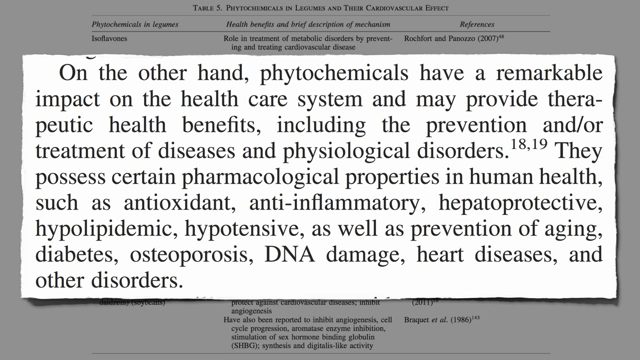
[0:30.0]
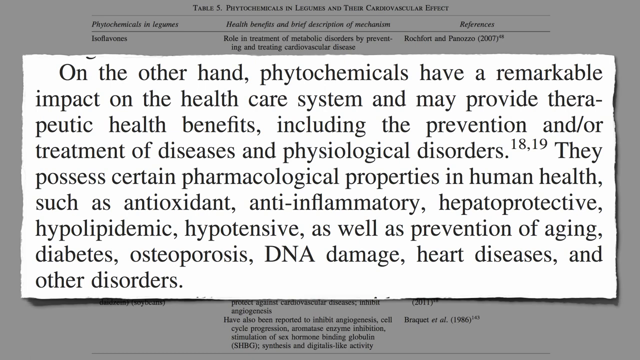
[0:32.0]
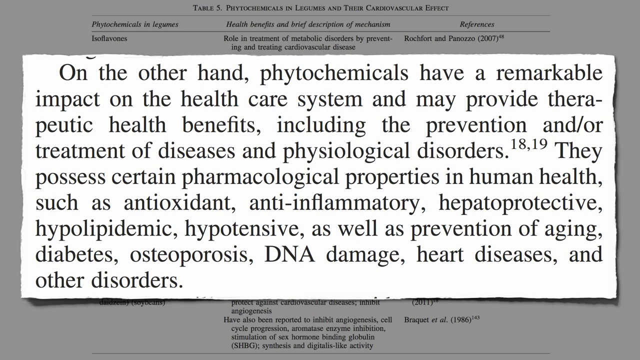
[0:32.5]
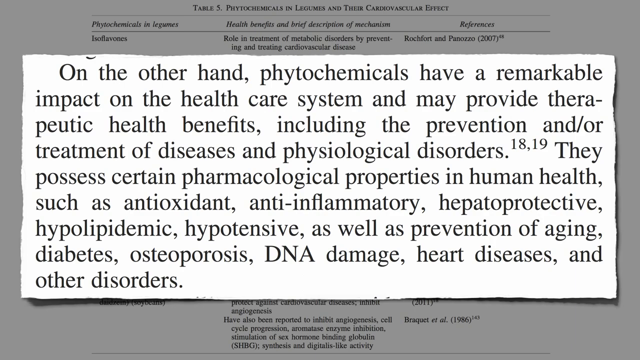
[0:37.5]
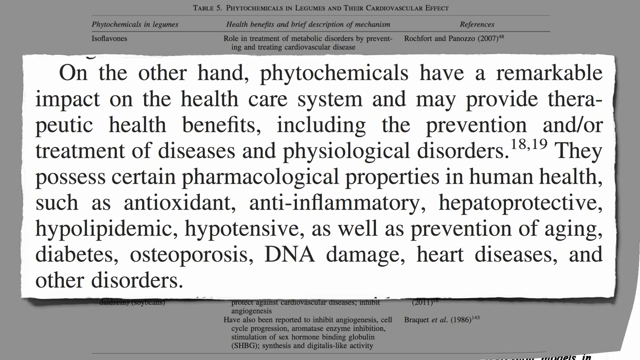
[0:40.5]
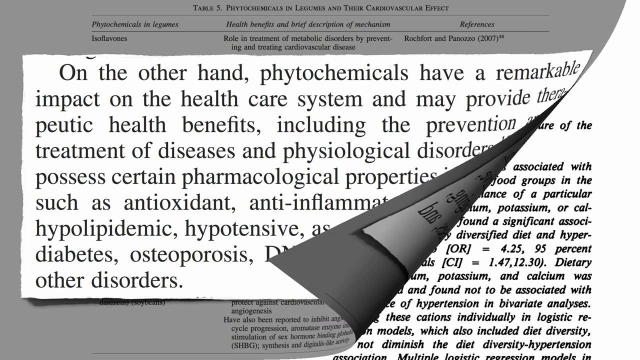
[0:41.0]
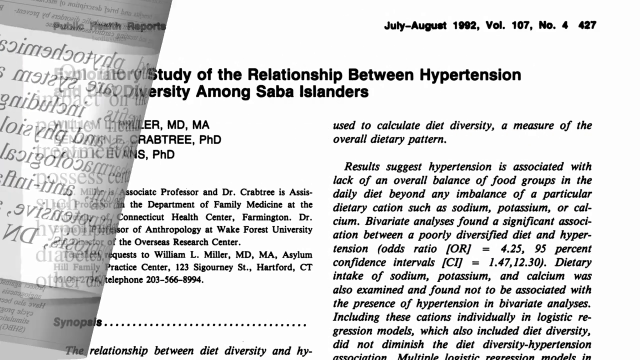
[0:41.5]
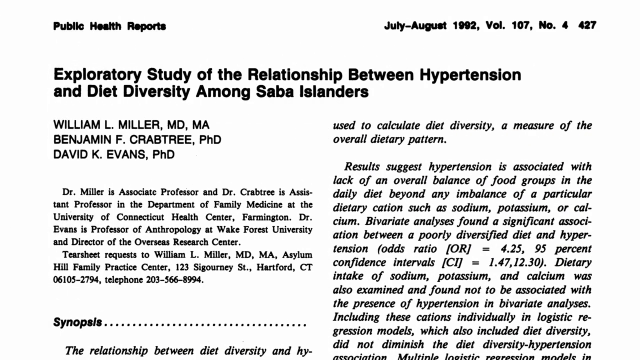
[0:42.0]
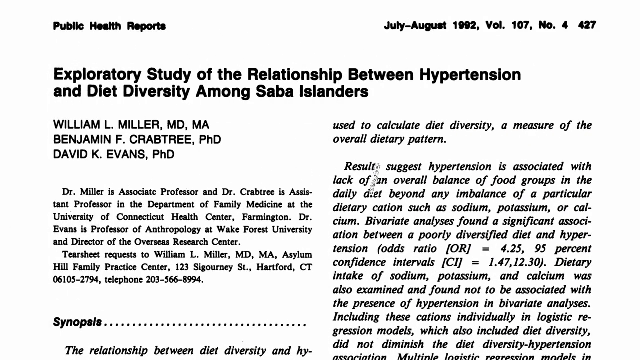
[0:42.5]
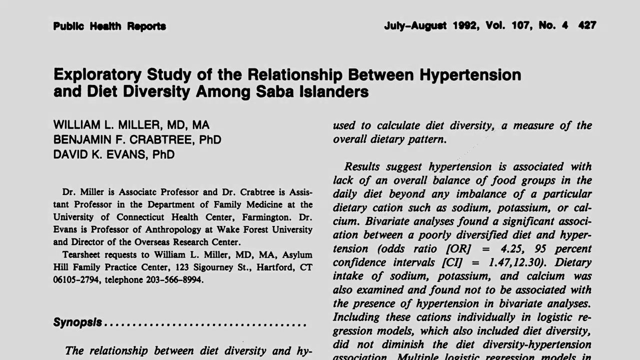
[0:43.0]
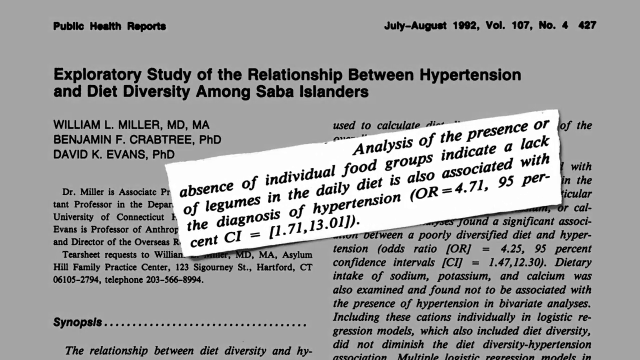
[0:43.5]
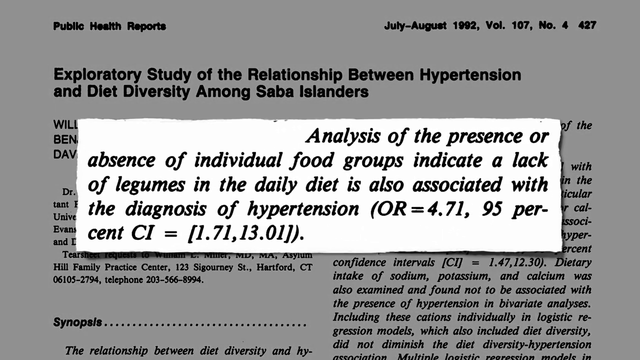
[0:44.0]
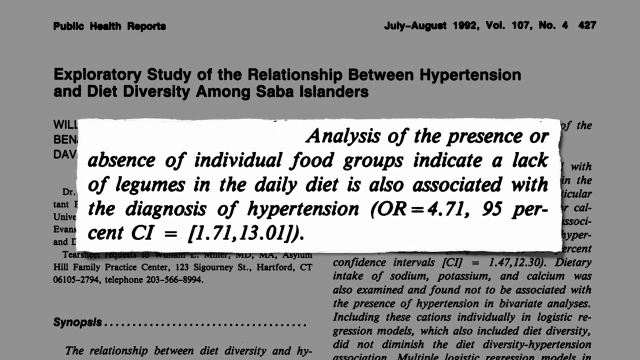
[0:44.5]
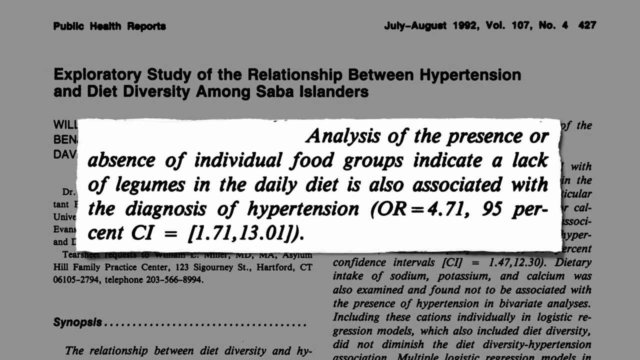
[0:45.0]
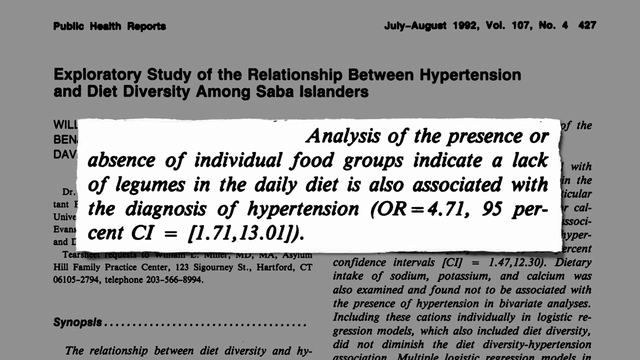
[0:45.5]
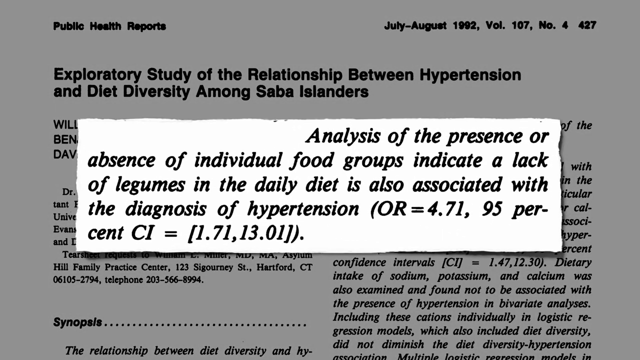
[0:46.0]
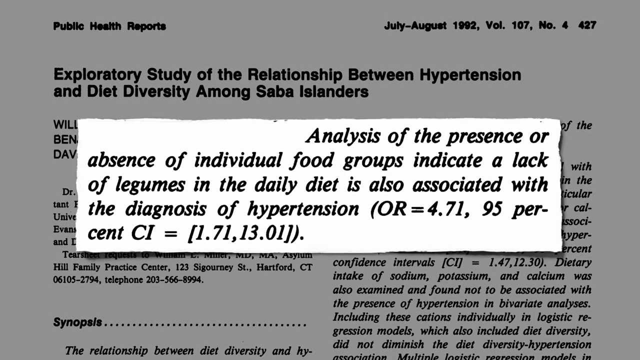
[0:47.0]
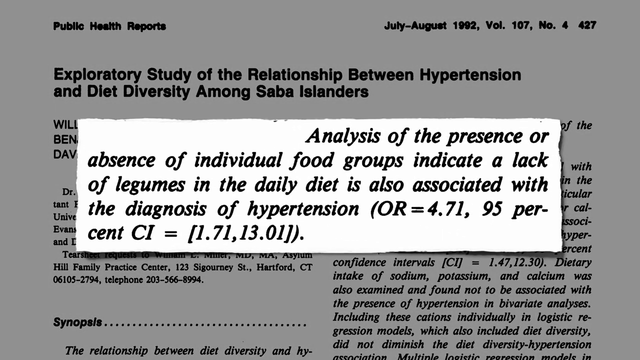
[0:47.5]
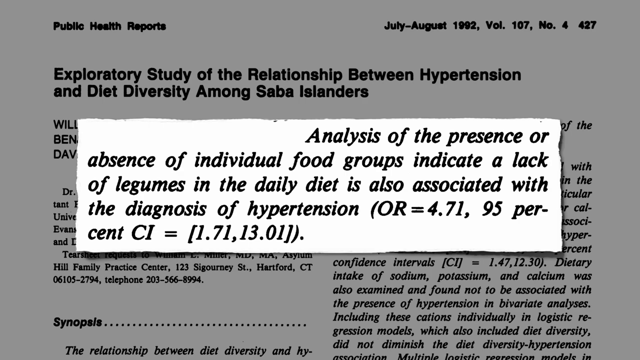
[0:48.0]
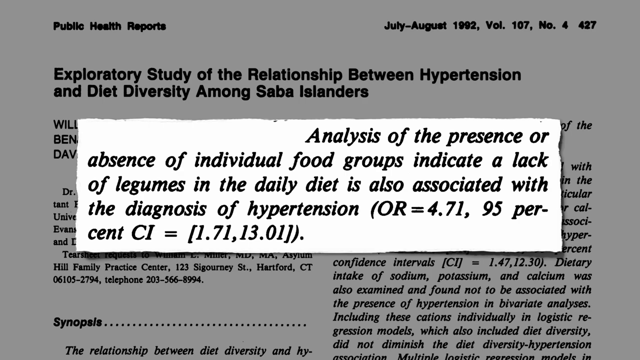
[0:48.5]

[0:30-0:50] An excerpt from a scientific journal article about what legumes can help with is shown, reading "on the other hand, phytochemicals have a remarkable impact on the healthcare system and may provide therapeutic health benefits, including the prevention and or treatment of diseases and physiological disorders. They process certain pharmacological properties in human health, such as antioxidant, anti-inflammatory, hepatoprotective, hypolipidemic, hypotensive, as well as prevention of aging, diabetes, osteoporosis, DNA damage, heart diseases, and other disorders." This is taken from part of the article, which is in the background. A right-to-left transition like a page flip leads to another journal page titled "Exploratory study on the relationship between hypertension and diet diversity among Saba Islanders", from July to August 1992, volume 107, number 4, 427 of Public Health Reports. Only an excerpt is shown, and a specific portion is highlighted as the view zooms in, reading "analysis of the presence or absence of individual food groups indicate a lack of legumes in the daily diet is also associated with the diagnosis of hypertension".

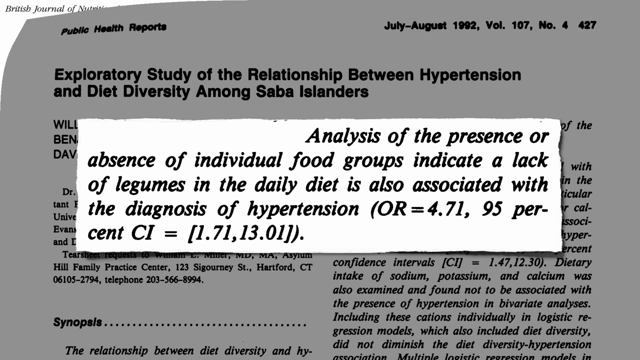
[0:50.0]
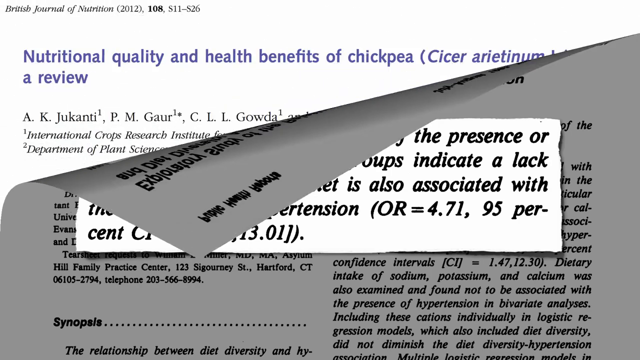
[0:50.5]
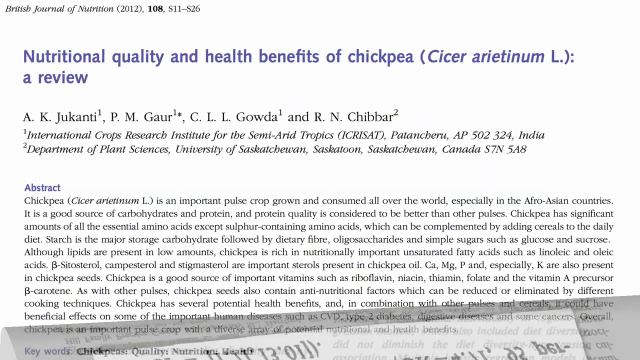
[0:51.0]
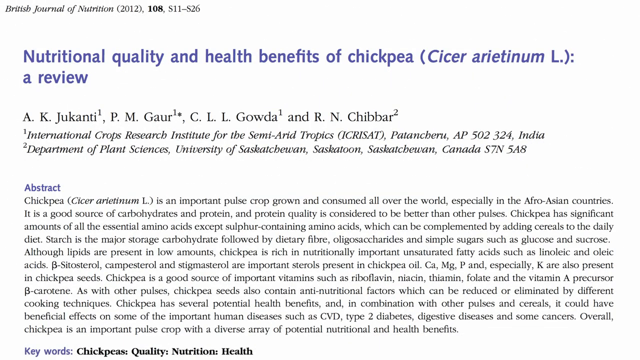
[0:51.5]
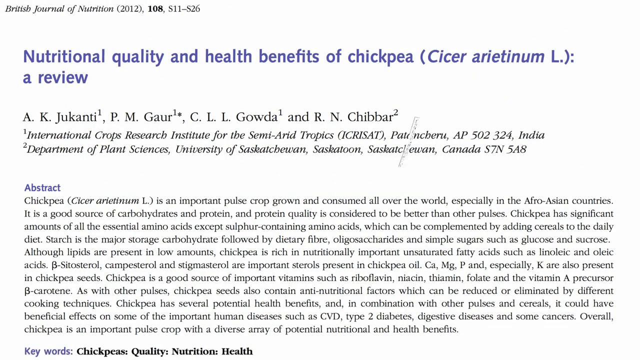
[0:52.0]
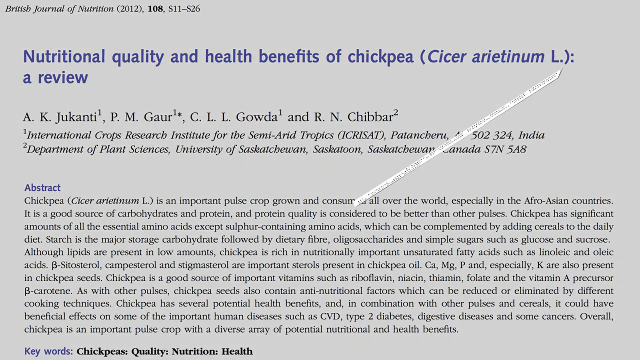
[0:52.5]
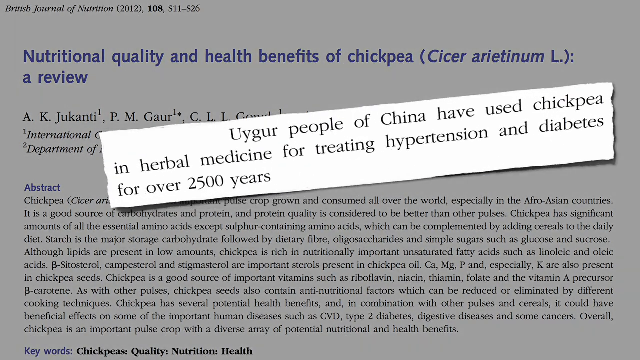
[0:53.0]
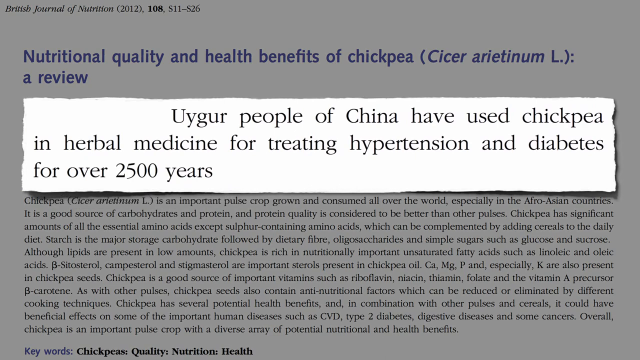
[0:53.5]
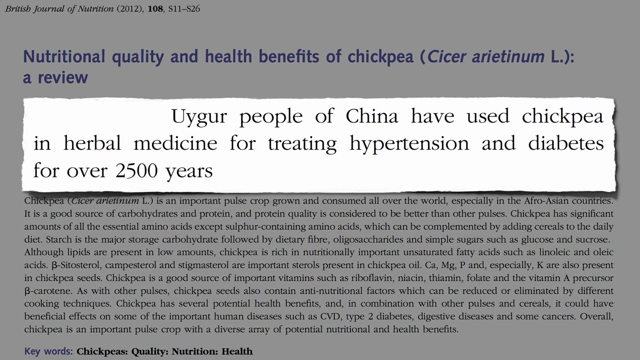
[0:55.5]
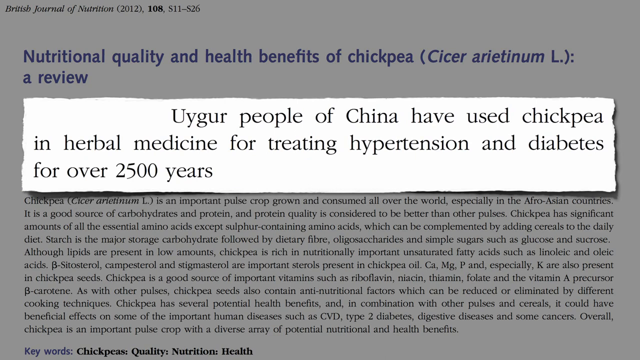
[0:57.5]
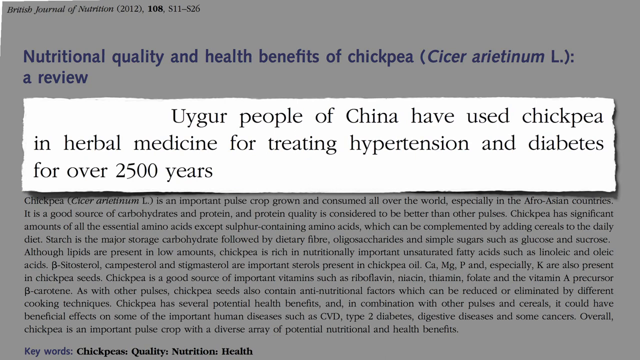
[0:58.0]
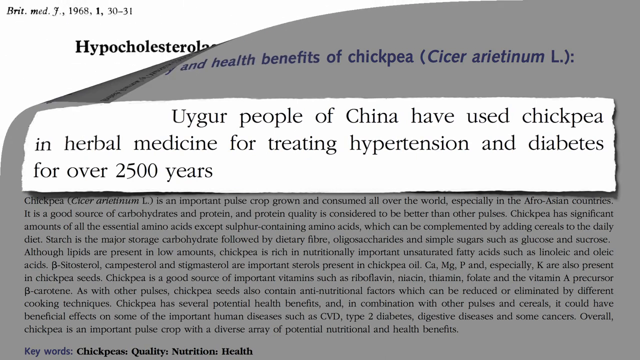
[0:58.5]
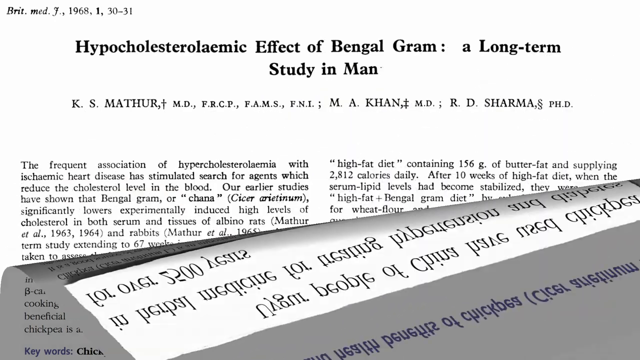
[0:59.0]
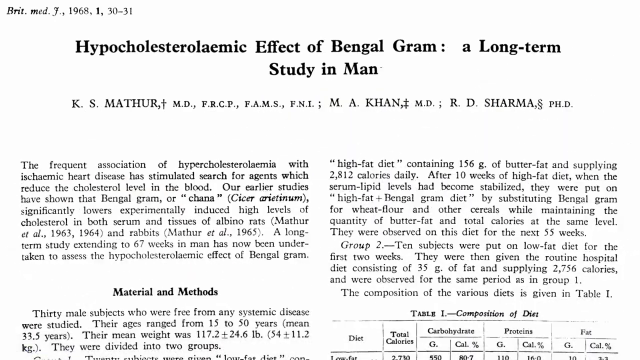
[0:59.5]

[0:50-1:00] An excerpt from a public health report reads "analysis of the presence or absence of individual food groups indicate a lack of legumes in the daily diet is also associated with the diagnosis of hypertension", followed by supporting numbers: "OR = 4.71, 95% CI = (1.71, 13.01)". A transition with a page flipping from up to down leads to another study titled "Nutritional quality and health benefits of chickpea", a review. Only the initial abstract is shown, under a heading reading "abstract"; it describes chickpeas as an important pulse crop grown and consumed all over the world. The authors listed are A. K. Gioconti, P. M. Gore, C. L. L. Goda and R. N. Chibber. The view then zooms in on an excerpt that reads "Uyghur people of China have chickpea and herbal medicine for treating hypertension and diabetes for over 2,500 years". Another study about West Bengal follows.